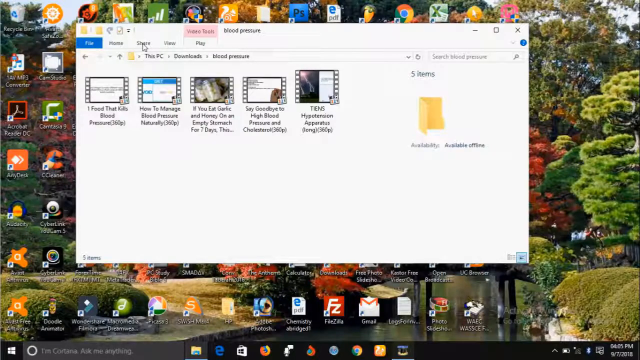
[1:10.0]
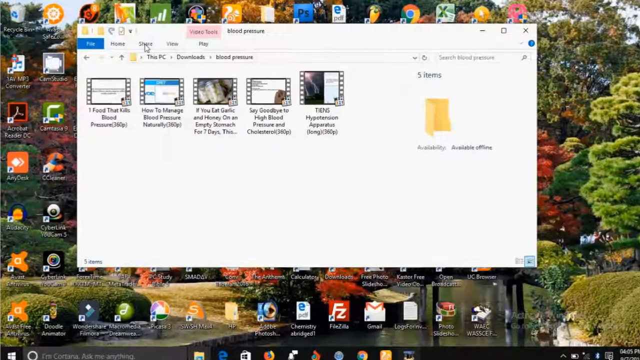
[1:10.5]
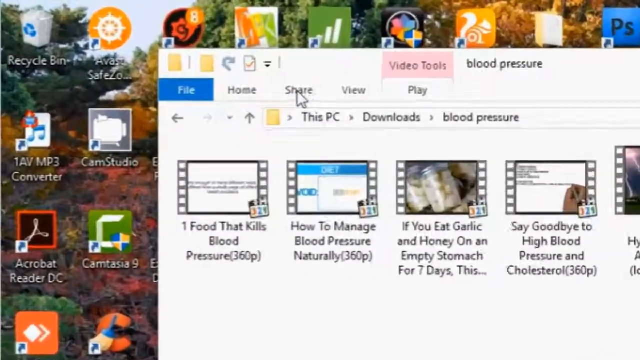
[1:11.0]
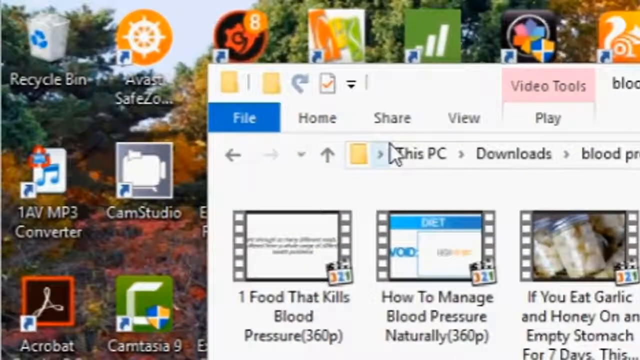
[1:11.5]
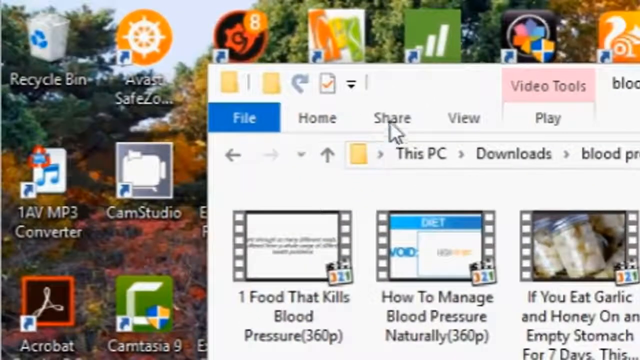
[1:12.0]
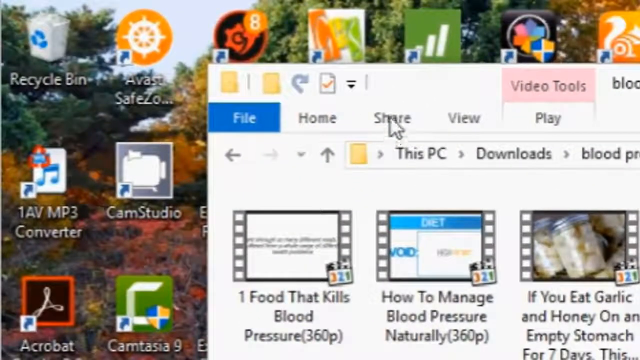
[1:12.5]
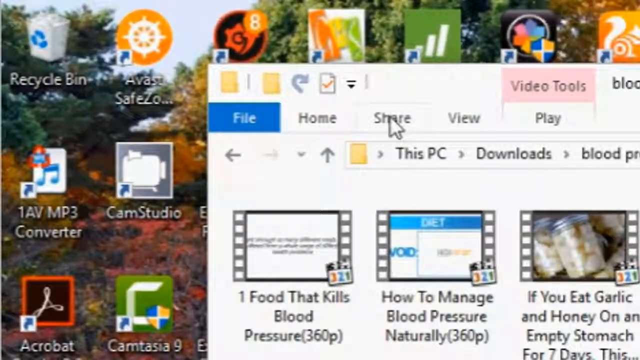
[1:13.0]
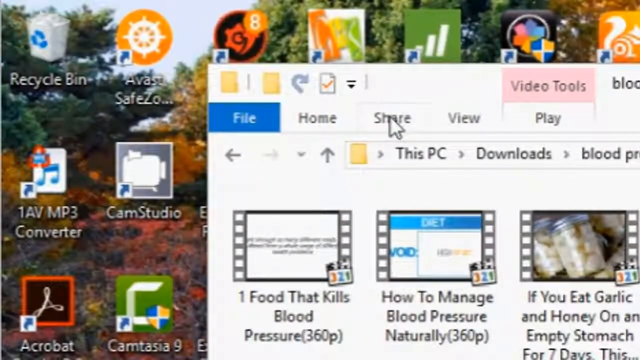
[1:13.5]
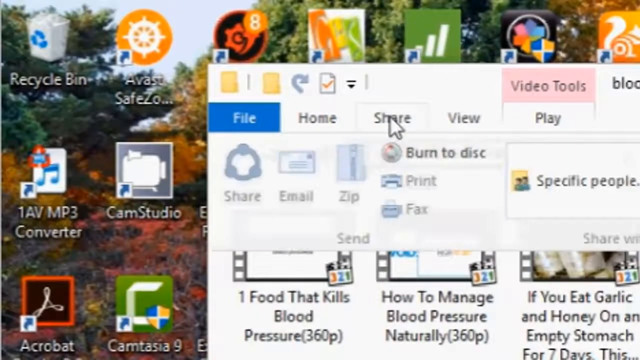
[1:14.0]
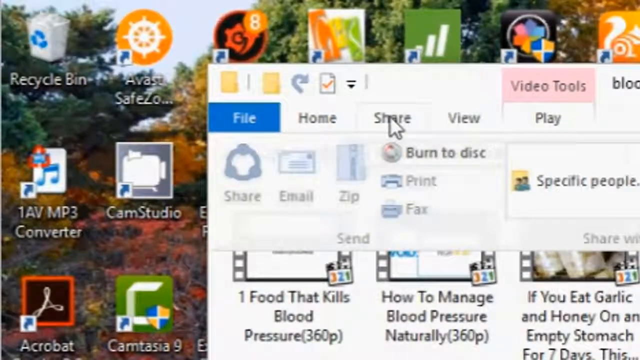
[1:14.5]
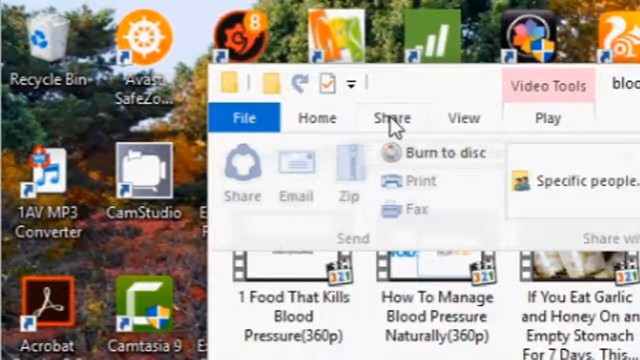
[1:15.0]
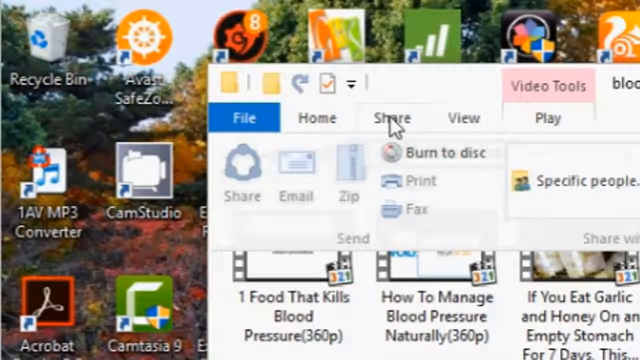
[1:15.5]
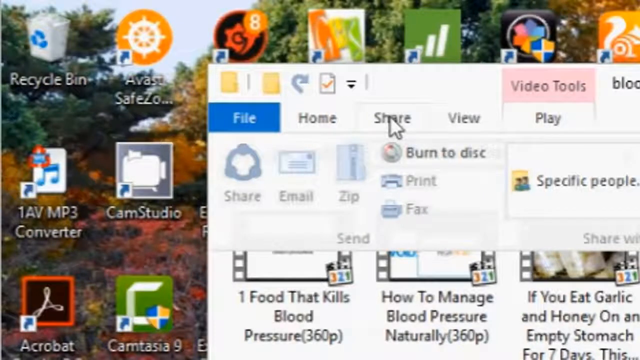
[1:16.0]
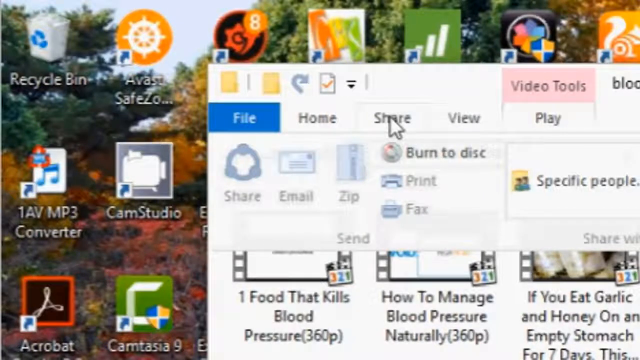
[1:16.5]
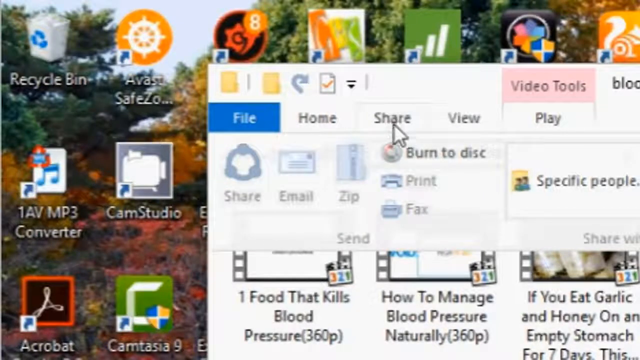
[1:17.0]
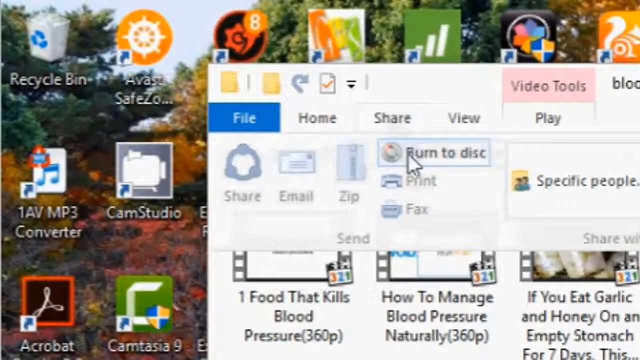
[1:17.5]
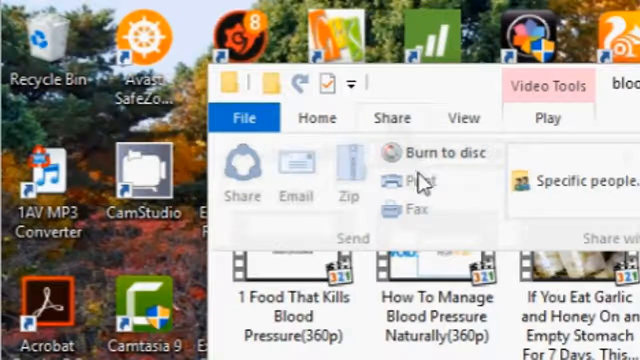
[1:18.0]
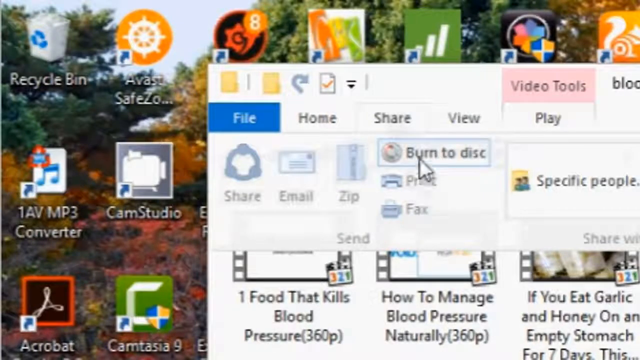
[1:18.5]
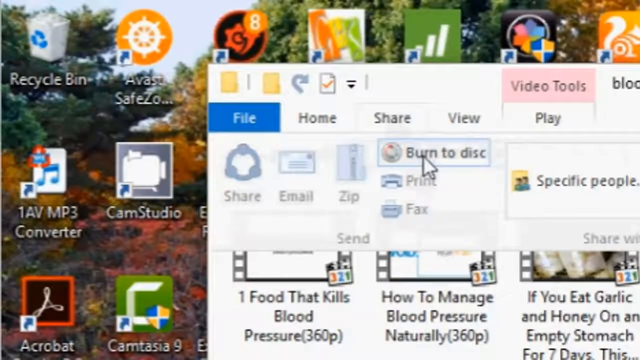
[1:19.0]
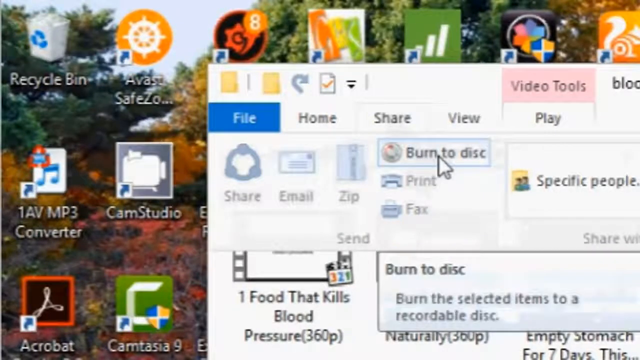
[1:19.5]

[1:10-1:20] The screen returns to File Explorer in the Blood Pressure folder. The user zooms in on the File Explorer menu, which shows File, Home, Share, View, Play and Video Tools. The user clicks Share, opening a menu with Share, Email, Zip, Burn to disc, Print, Fax and Share with specific people. The user hovers on Burn to disk, and a description appears reading "burn to disk, burn the selected item to a recordable disk".